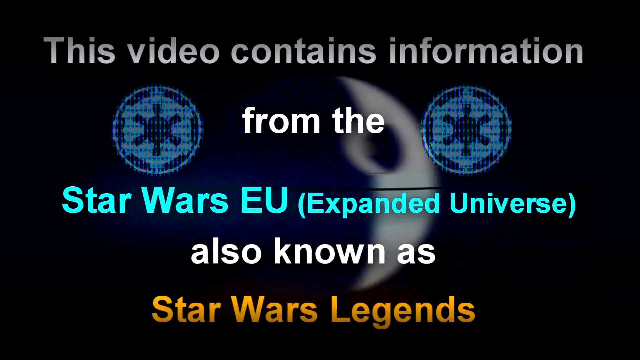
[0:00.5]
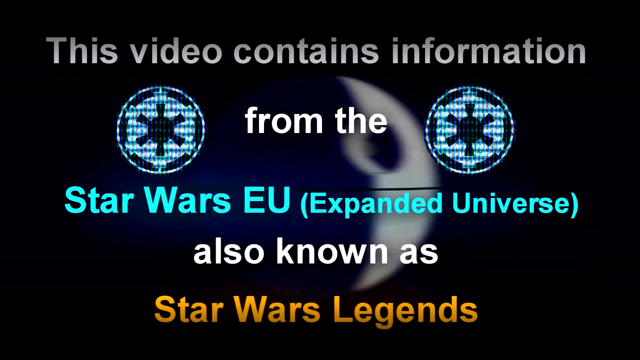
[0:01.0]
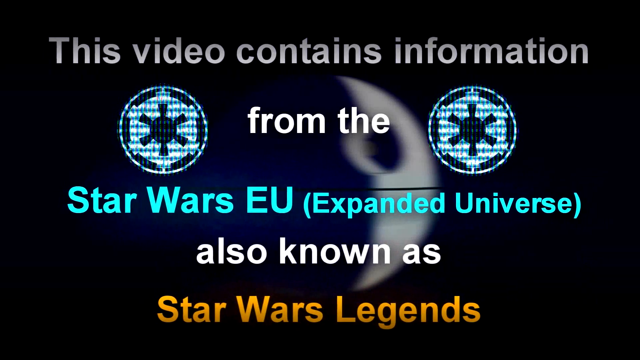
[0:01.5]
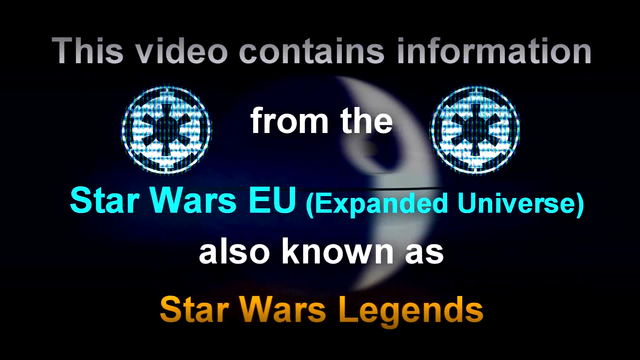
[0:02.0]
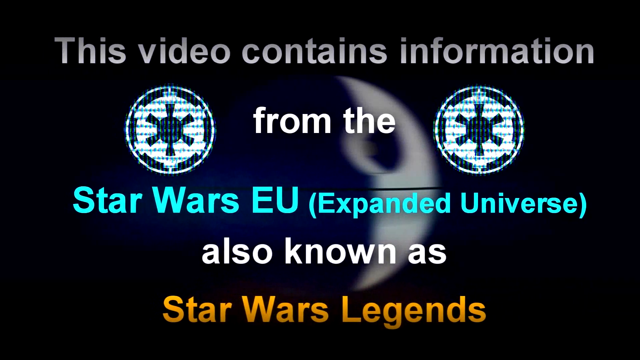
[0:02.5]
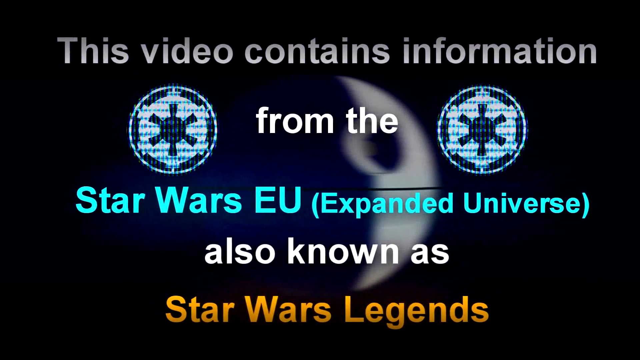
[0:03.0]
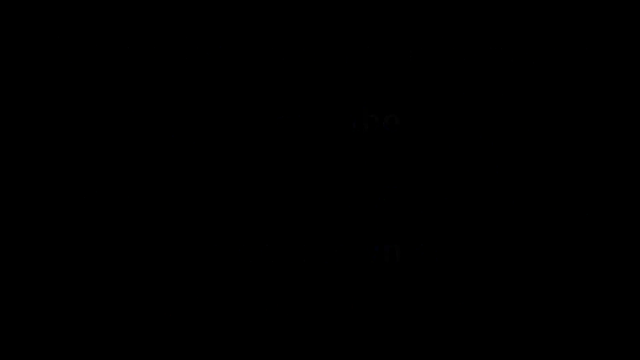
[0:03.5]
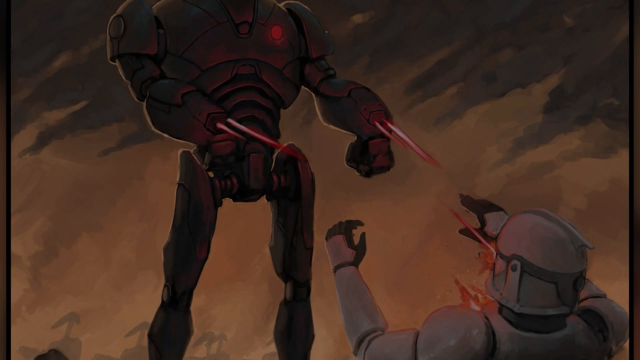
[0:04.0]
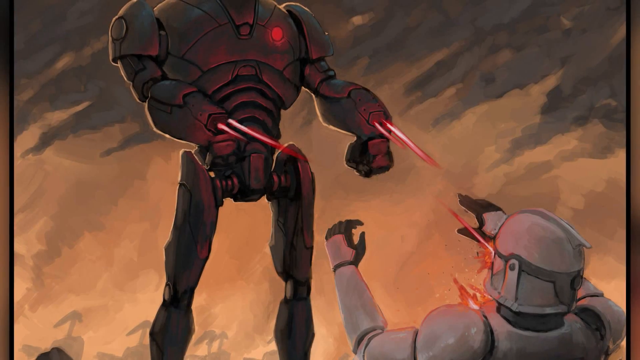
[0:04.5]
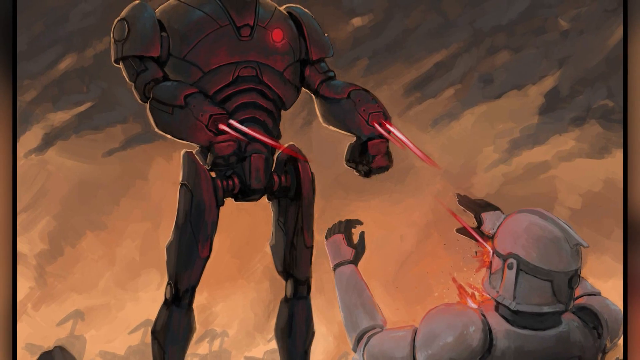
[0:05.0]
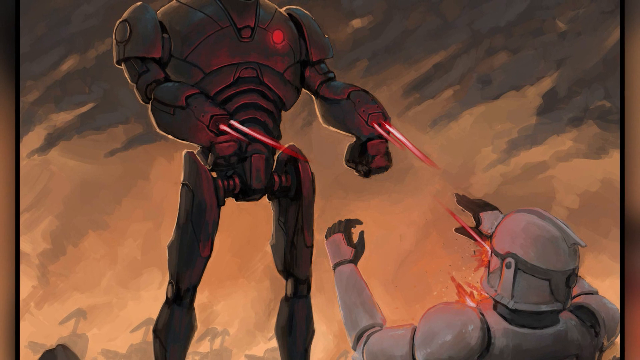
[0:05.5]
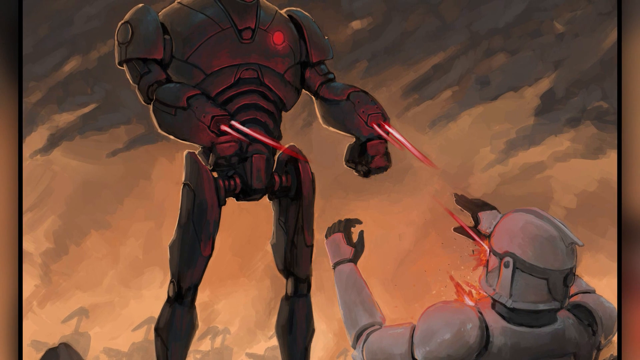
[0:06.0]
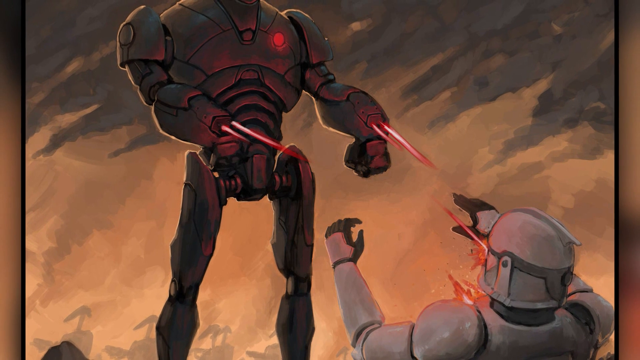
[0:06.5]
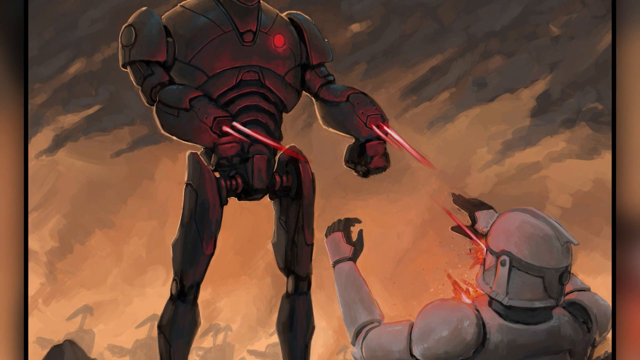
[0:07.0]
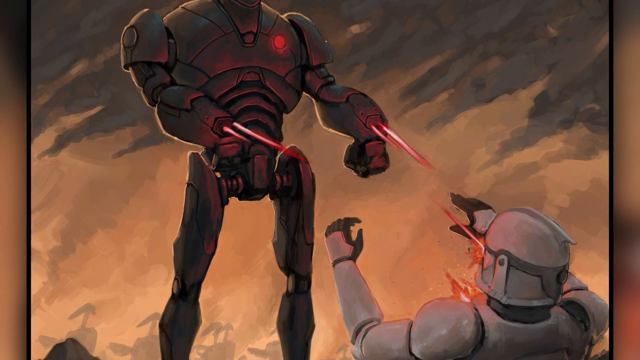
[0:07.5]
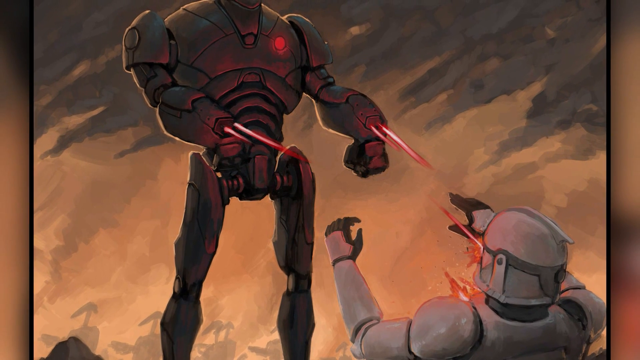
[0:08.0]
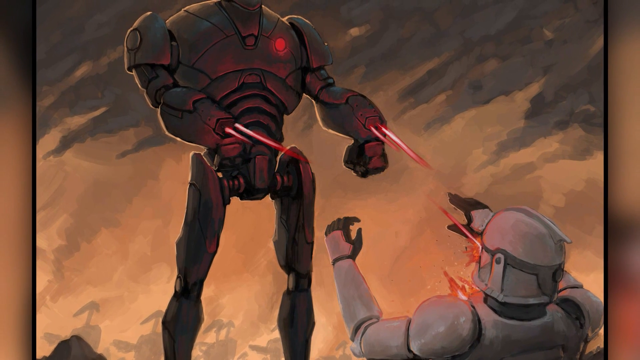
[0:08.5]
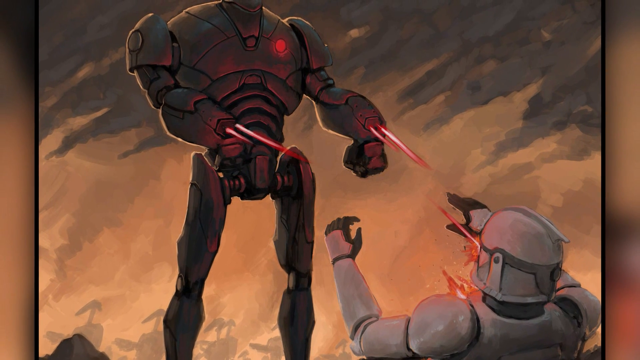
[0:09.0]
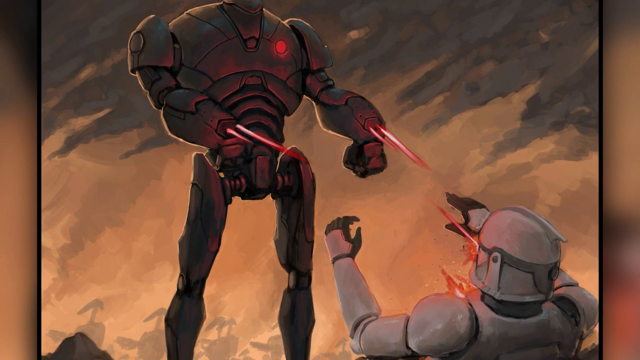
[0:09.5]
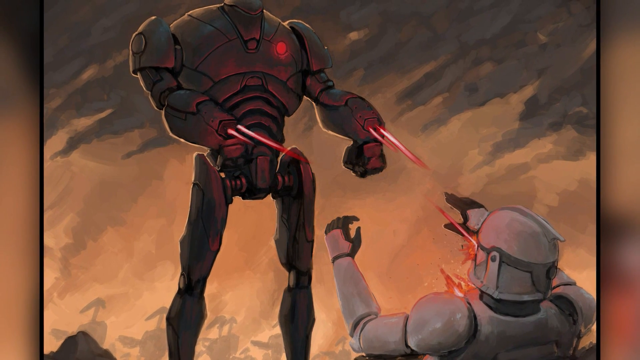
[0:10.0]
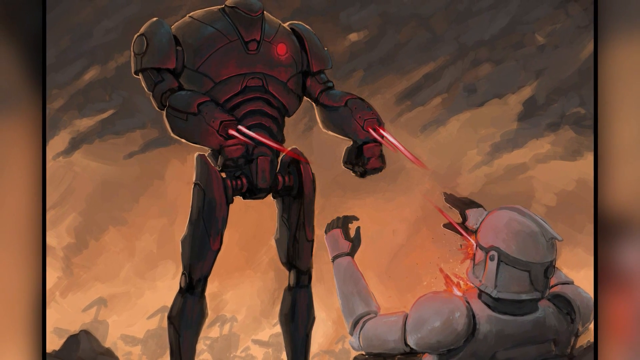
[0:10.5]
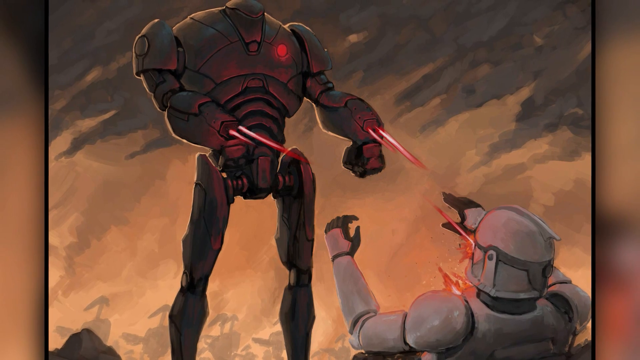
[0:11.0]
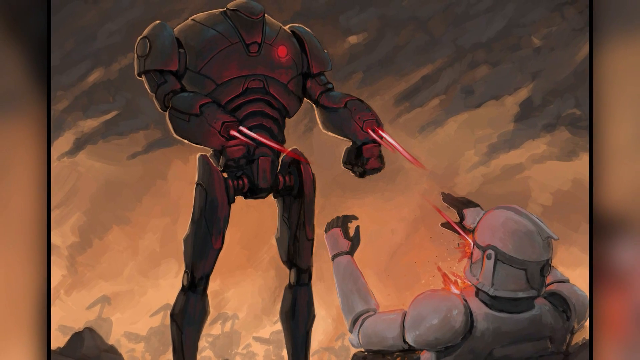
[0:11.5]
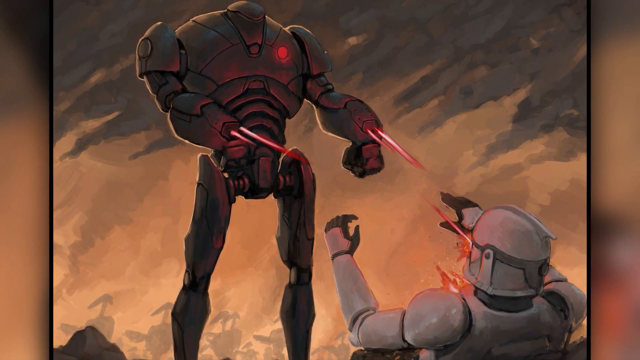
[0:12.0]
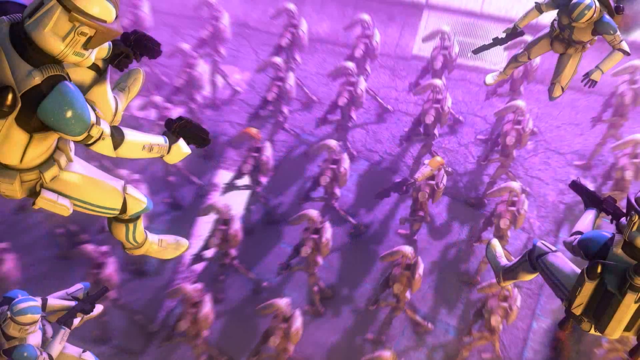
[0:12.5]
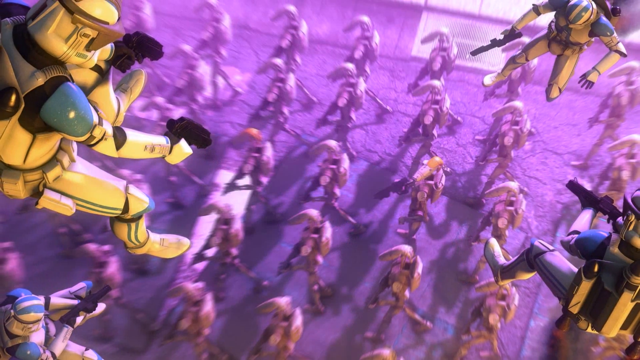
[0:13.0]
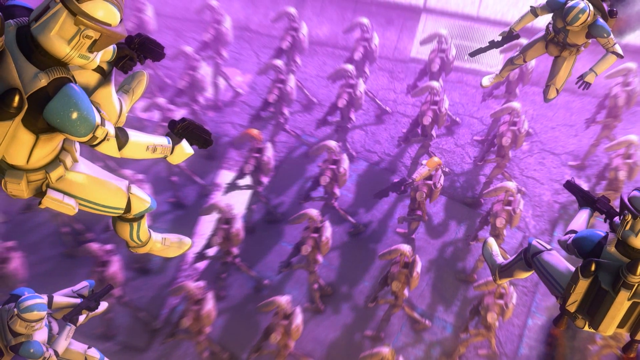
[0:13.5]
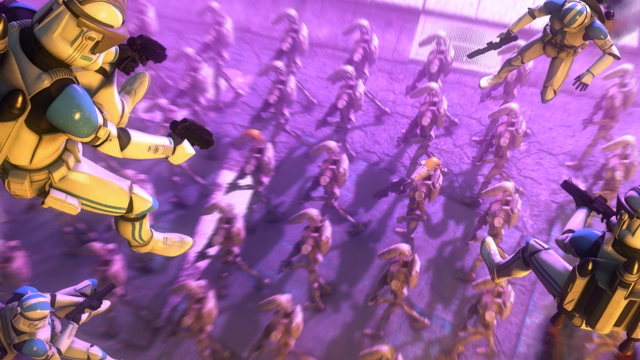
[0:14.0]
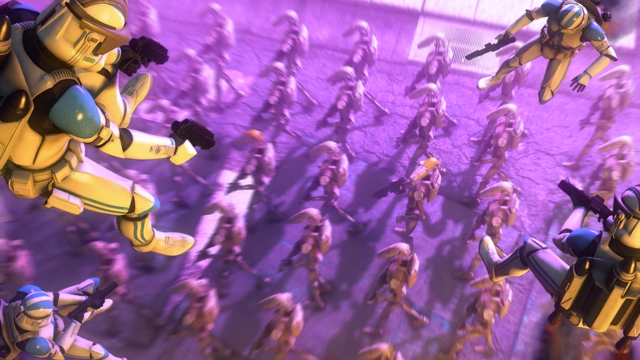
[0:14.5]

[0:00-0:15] The video opens with text reading "This video contains information from the Star Wars EU Expanded Universe, also known as Star Wars Legends." A graphic image shows a very tall robot figure with lasers pointing down at a smaller figure. The lasers shooting out of the tall robot are bright red, and the robot being shot at seems to be falling backwards. An aerial shot follows, showing some figures shooting down at many figures on the ground. The background sky is very dark and moody, and during the shooting from above the lighting is also moody and purple. At the very end there appear to be three figures shooting from above.